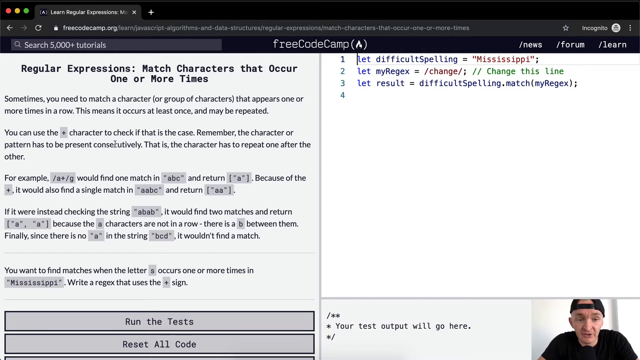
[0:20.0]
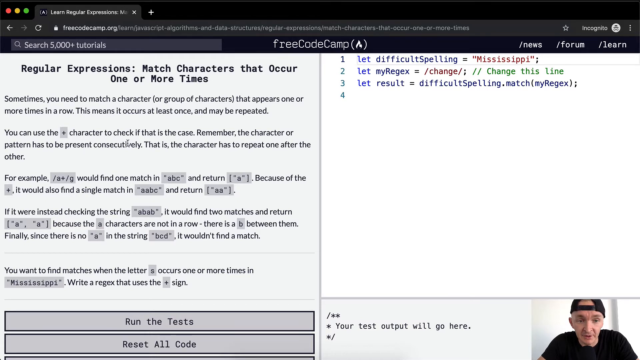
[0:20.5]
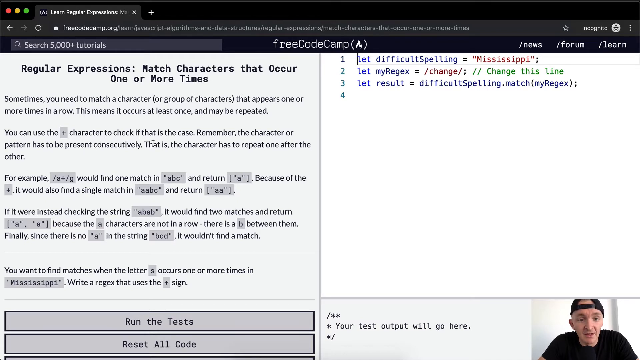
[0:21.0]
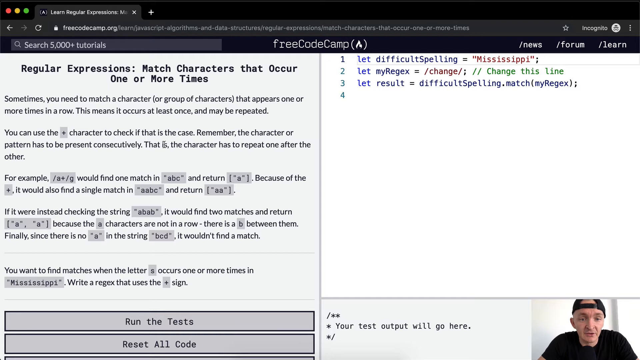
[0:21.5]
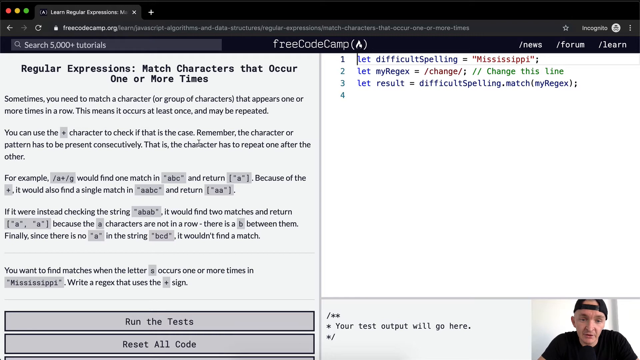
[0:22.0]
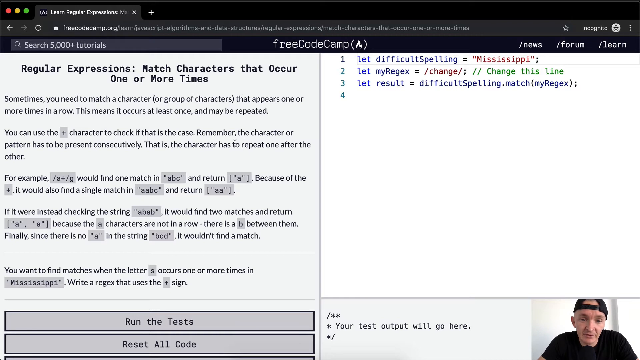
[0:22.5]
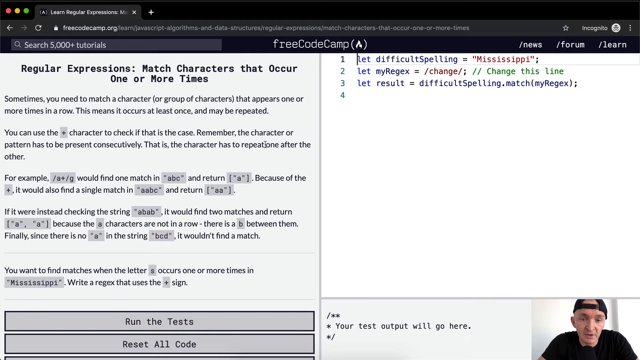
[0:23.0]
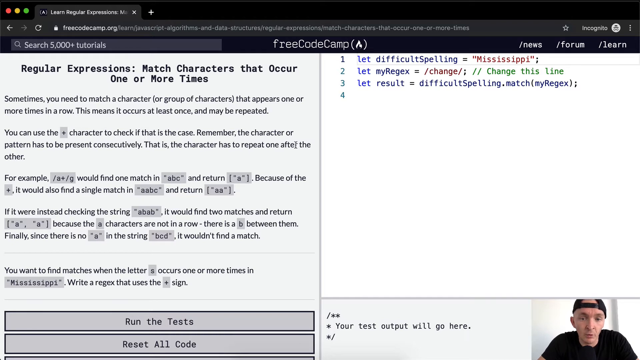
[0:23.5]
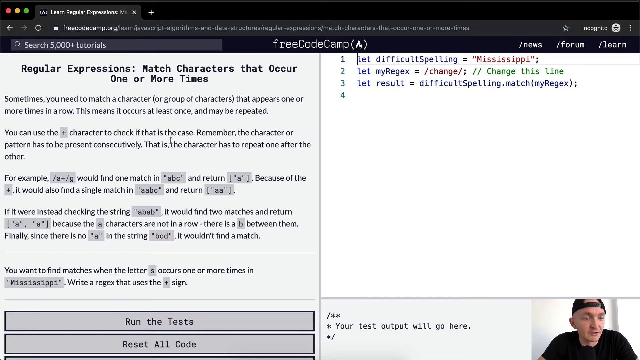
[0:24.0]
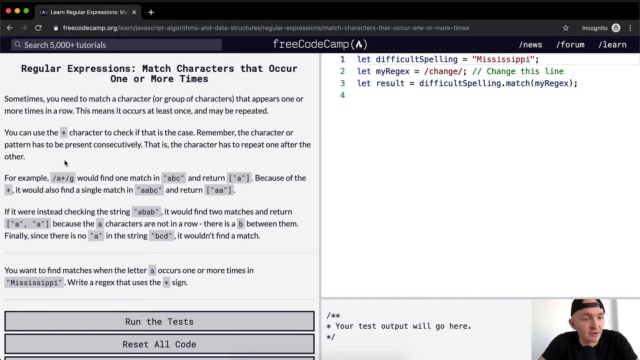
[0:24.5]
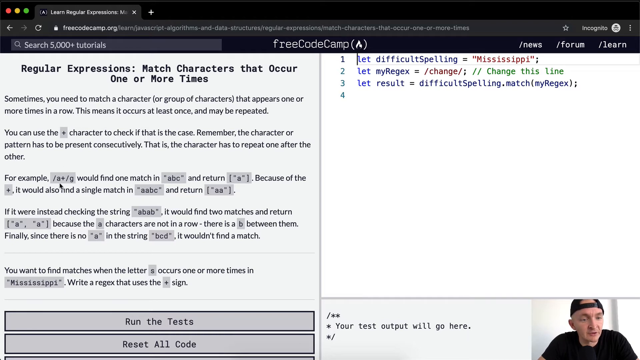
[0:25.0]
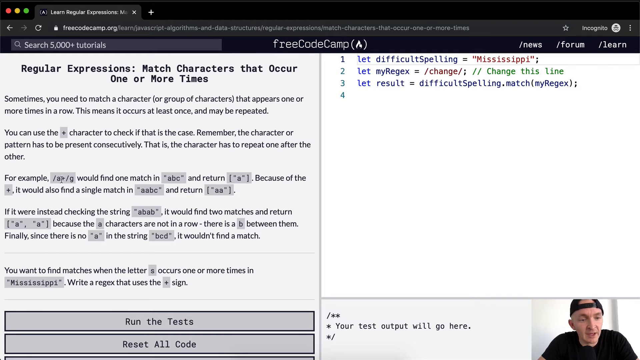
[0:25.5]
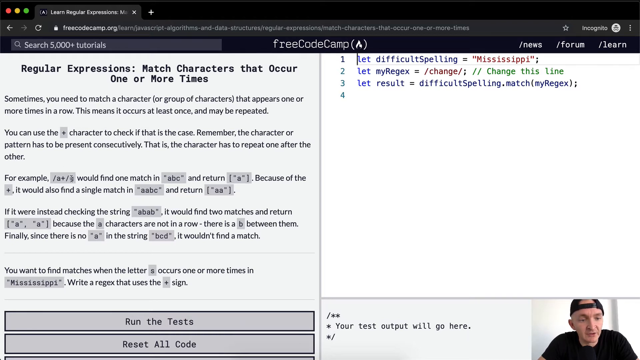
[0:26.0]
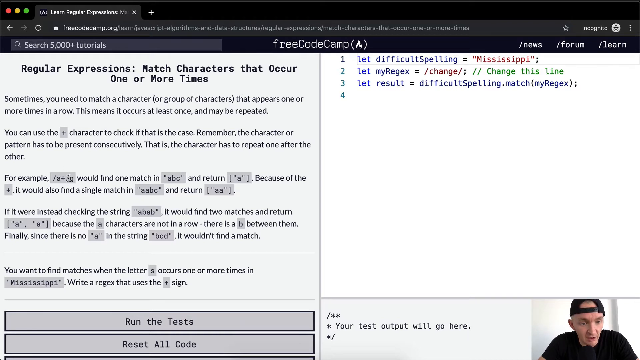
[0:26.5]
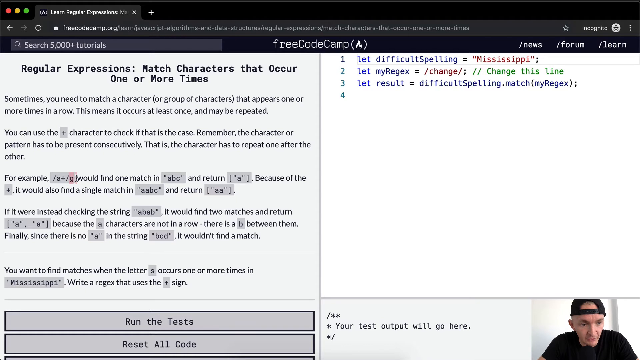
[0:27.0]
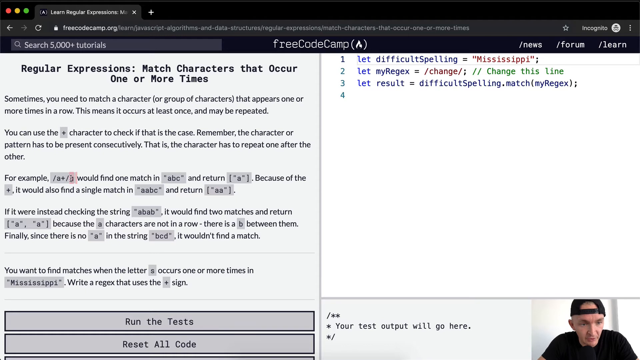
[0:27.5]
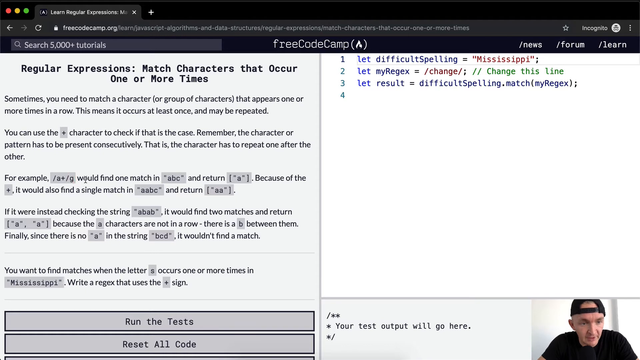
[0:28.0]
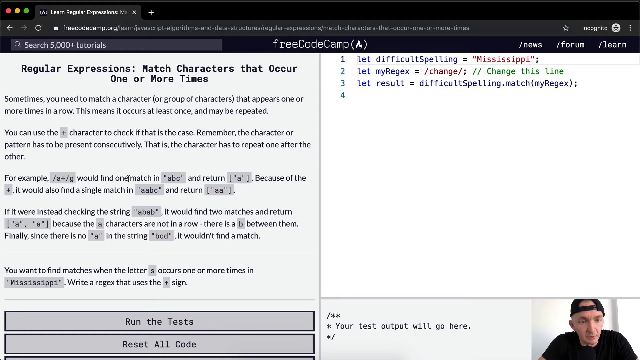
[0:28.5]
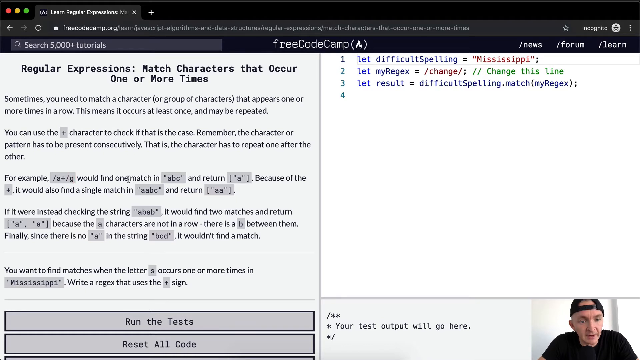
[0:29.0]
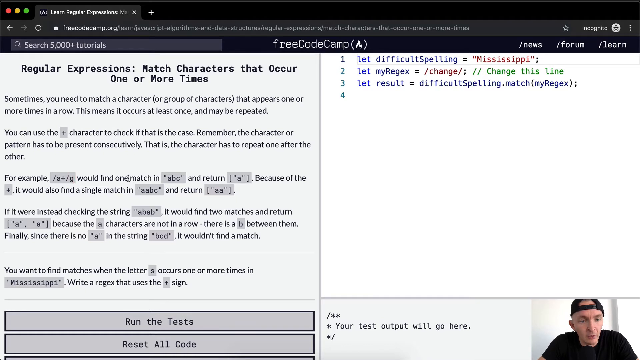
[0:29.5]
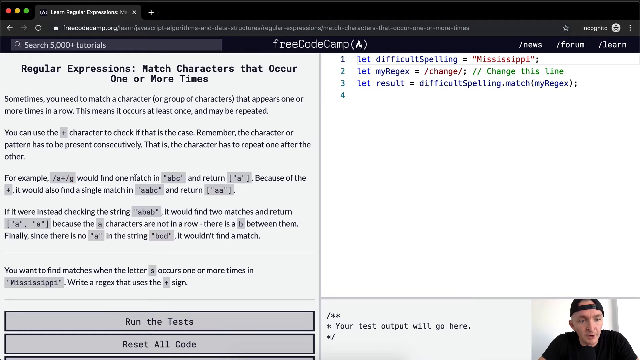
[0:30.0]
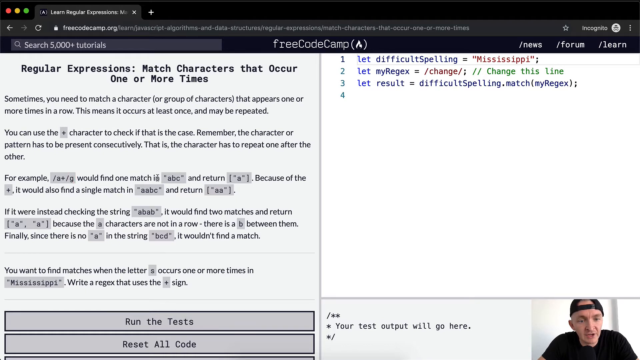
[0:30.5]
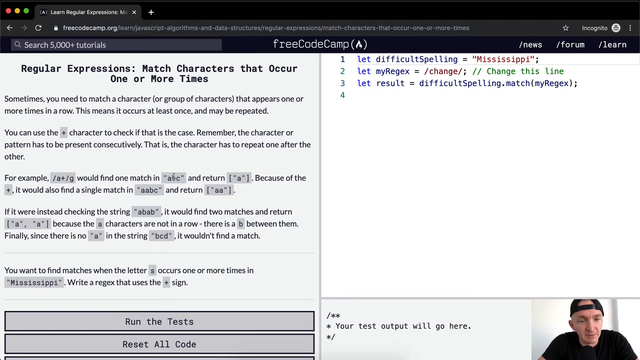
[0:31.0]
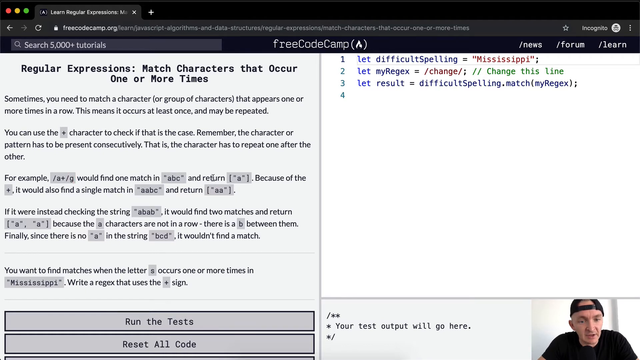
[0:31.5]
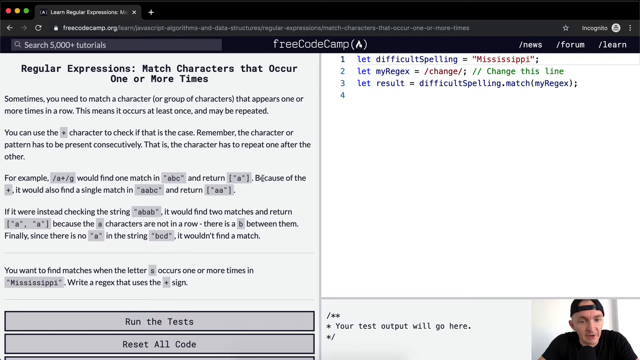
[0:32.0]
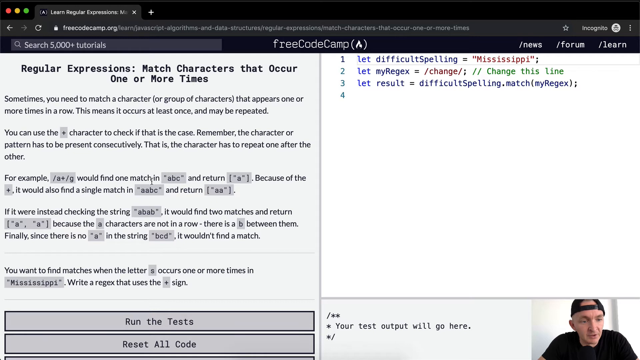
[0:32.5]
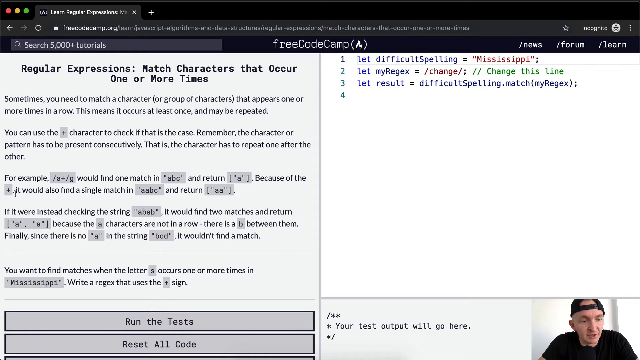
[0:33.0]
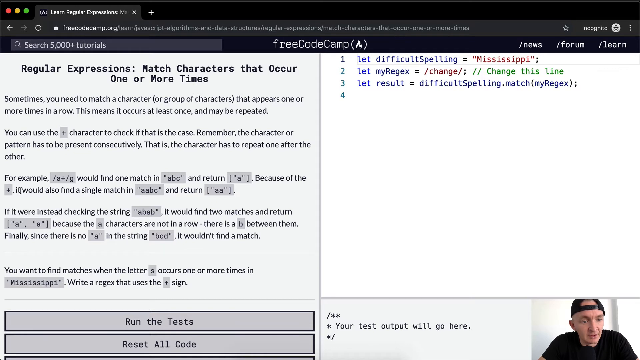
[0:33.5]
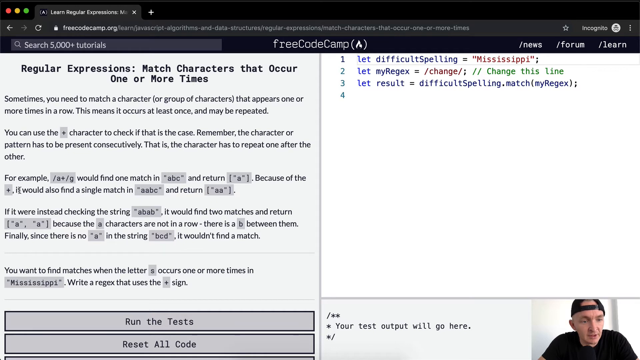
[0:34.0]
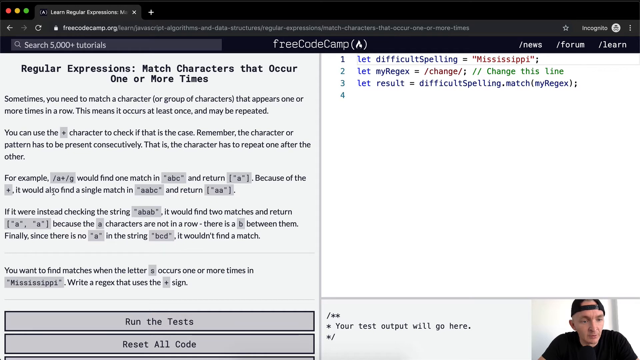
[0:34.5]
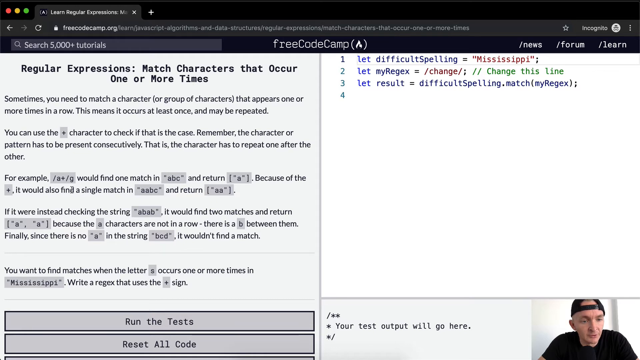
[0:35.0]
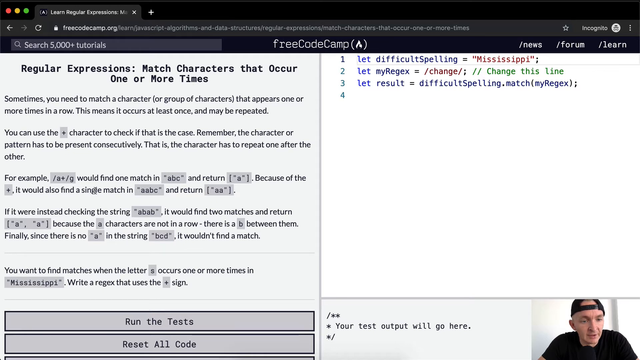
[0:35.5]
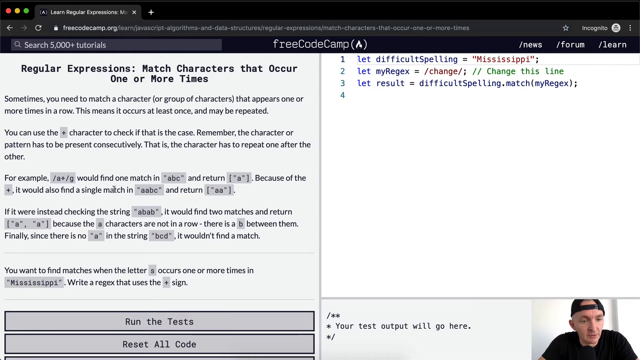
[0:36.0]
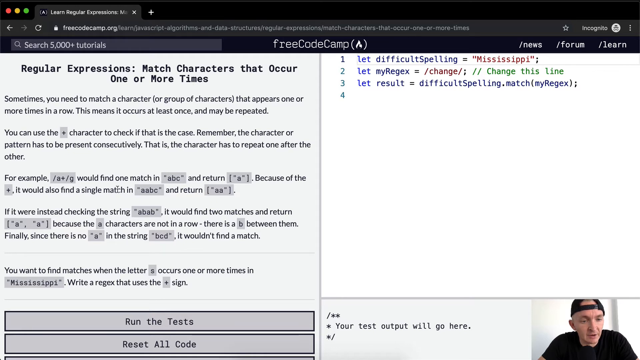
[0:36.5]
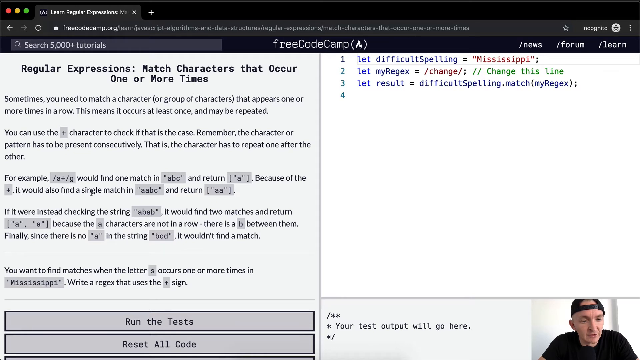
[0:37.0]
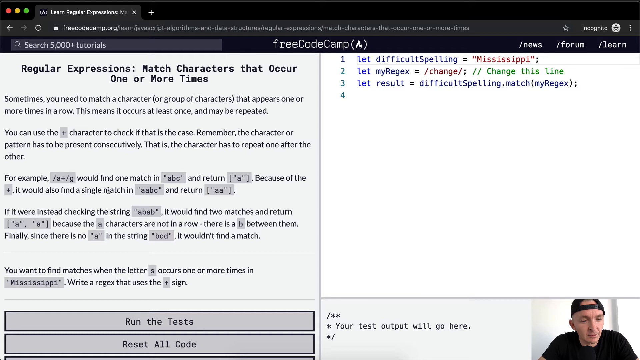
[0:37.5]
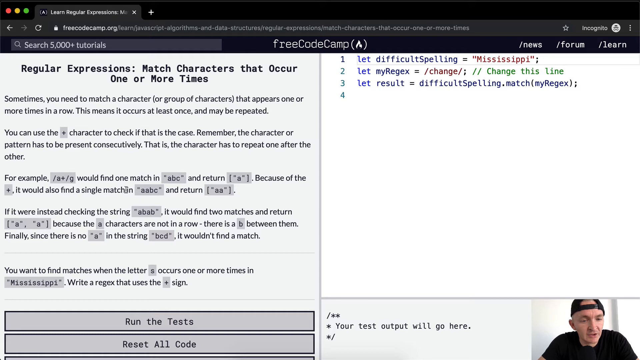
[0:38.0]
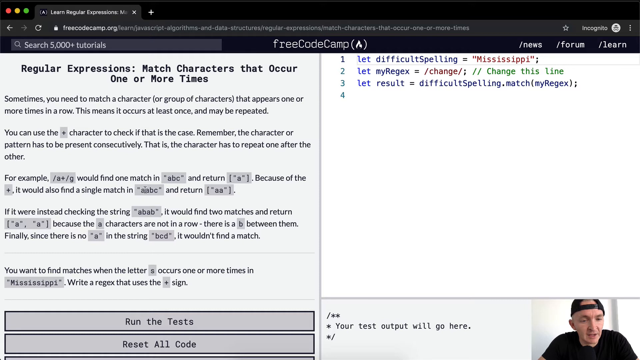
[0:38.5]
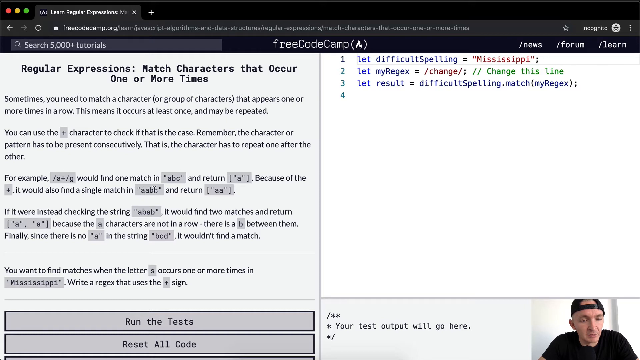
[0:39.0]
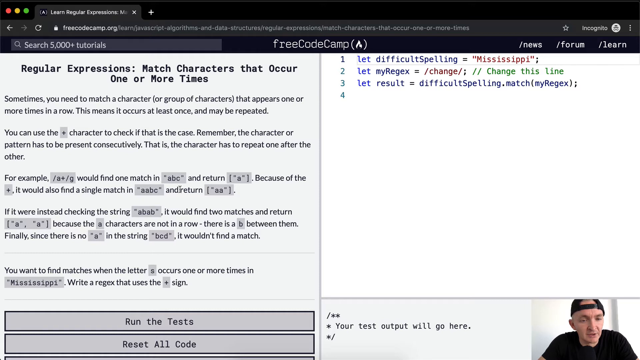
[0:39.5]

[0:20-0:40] An open tab says "free code camp" at the top, with a search bar that says "search 5000 plus tutorials". The page says "regular expressions, match characters that occur one or more times". On the right is a numbered list of lines 1 through 4 containing code; number 1 says "let difficult spelling equal Mississippi" and number 3 begins "let results equal difficult spelling". At the bottom is a man wearing a ball cap turned backwards and a black shirt. He moves his cursor along one step and one word at a time as he talks.